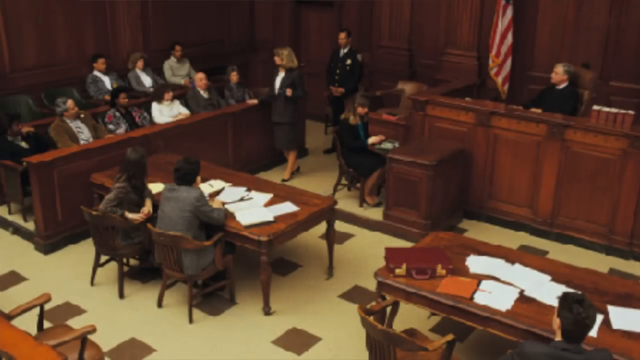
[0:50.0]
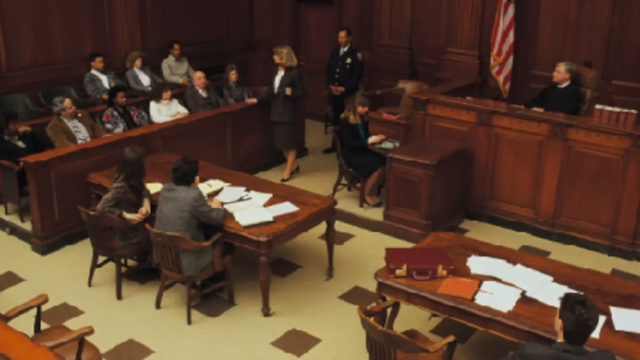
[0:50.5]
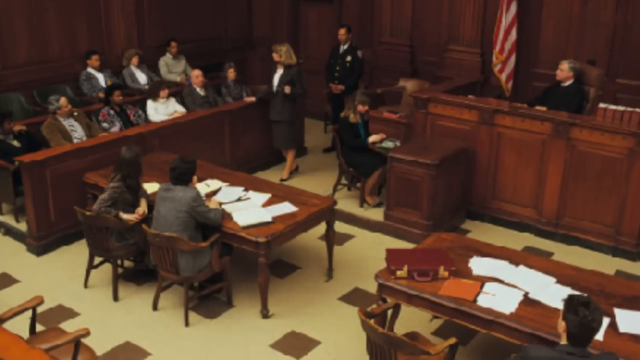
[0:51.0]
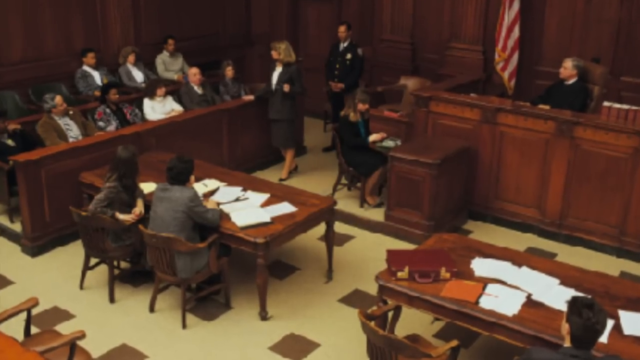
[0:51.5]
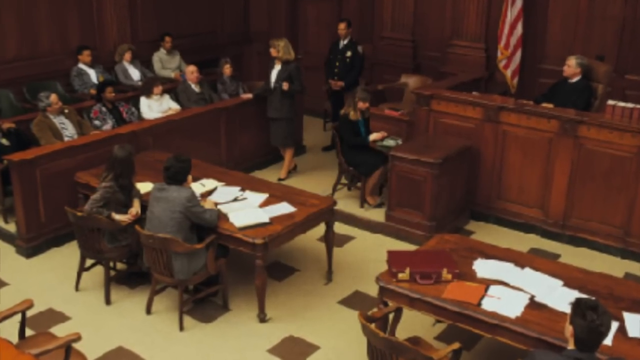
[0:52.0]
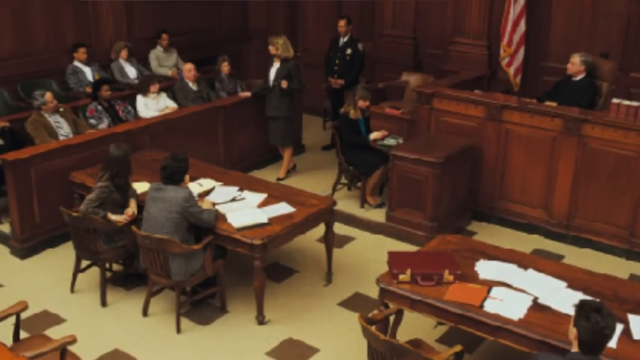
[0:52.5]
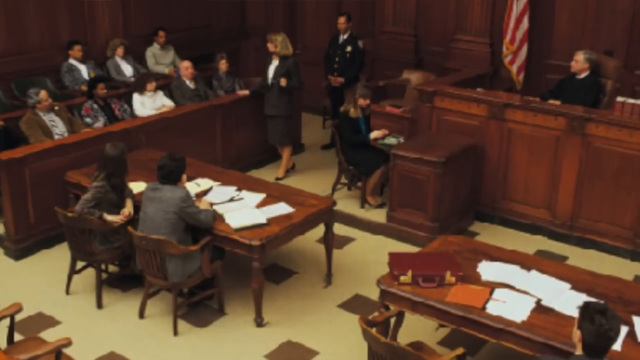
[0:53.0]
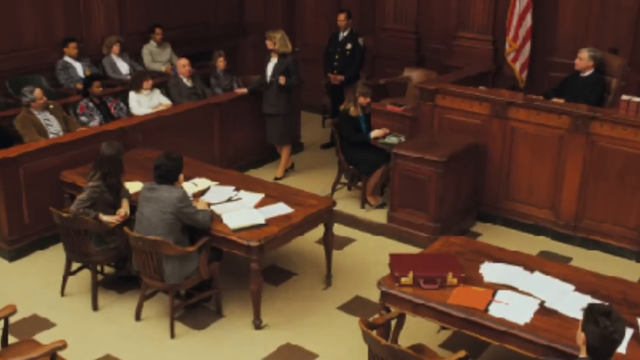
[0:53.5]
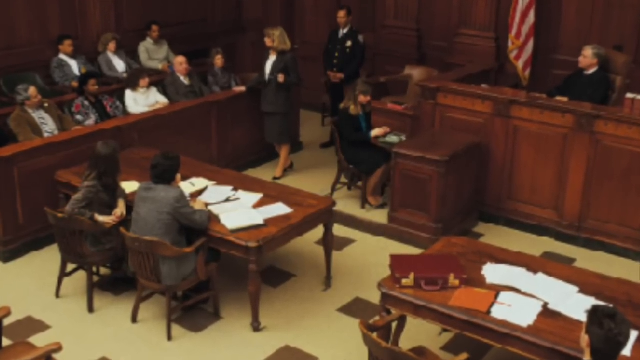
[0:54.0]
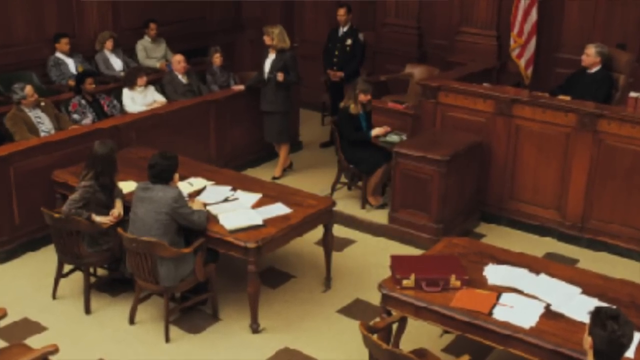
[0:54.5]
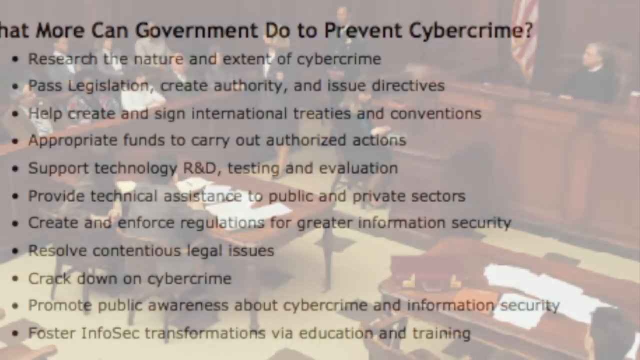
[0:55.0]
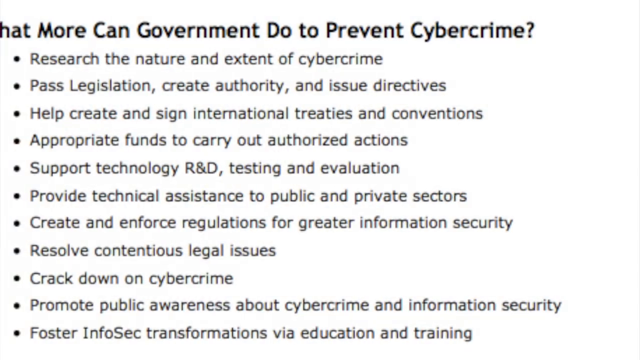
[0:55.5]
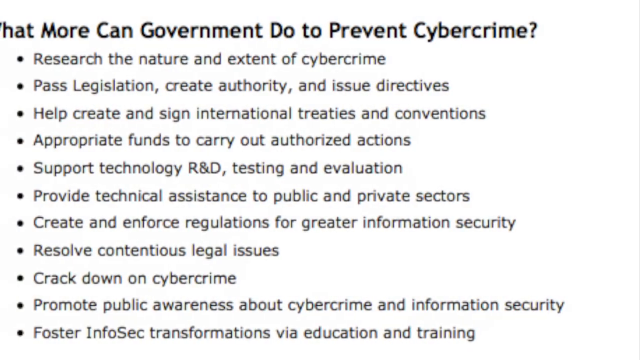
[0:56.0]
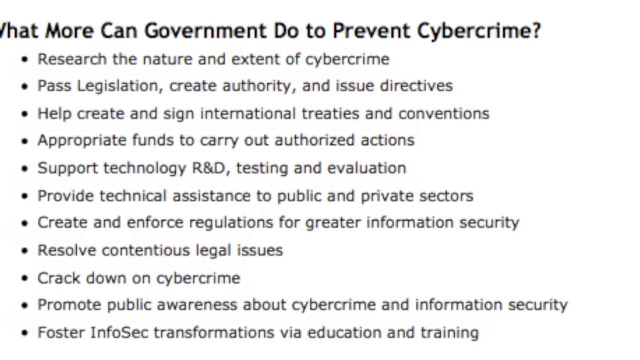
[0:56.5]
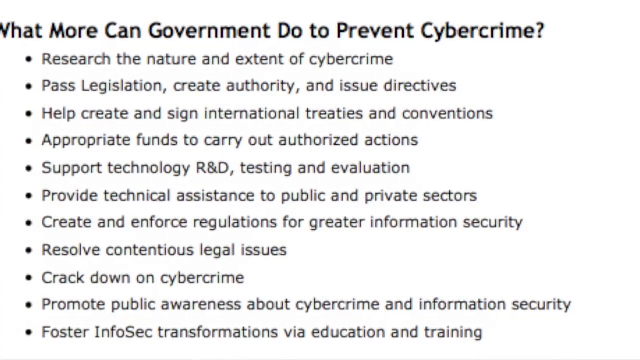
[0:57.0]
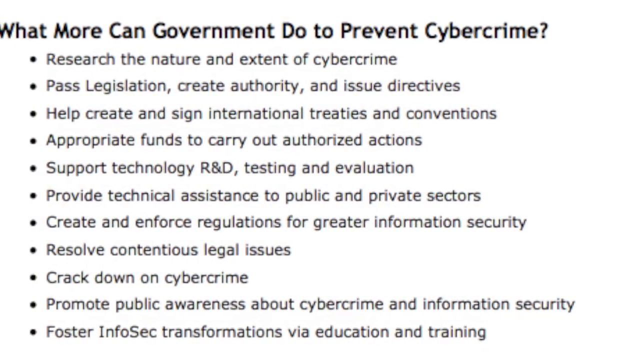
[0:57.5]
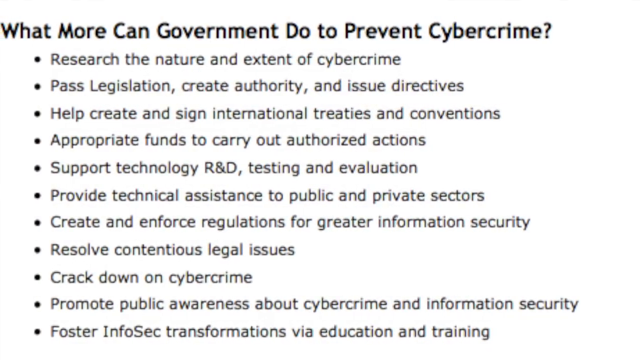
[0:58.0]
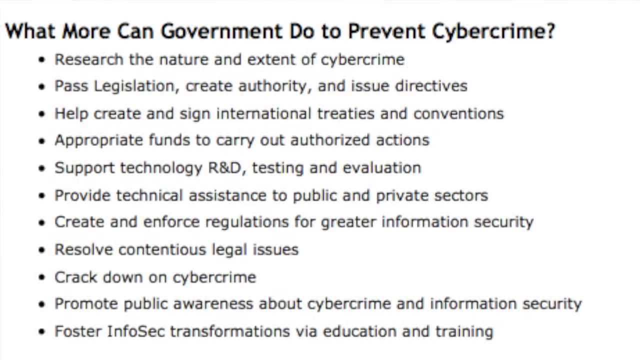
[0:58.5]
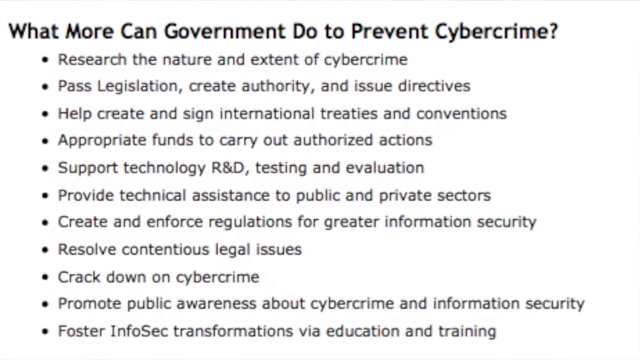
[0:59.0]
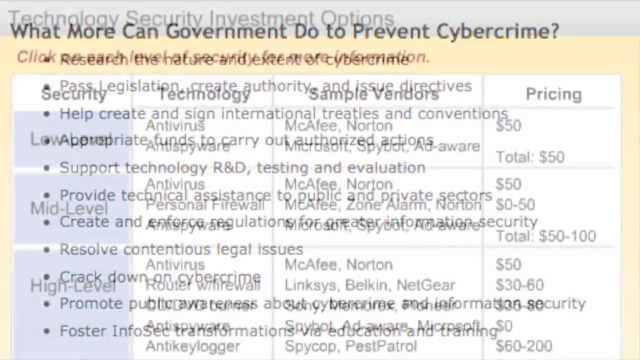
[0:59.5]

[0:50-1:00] A courtroom set up with wooden desks and chairs appears, with the judge seated. A woman has a desk facing the judge, and on the right side a police officer is standing. Men and women are sitting where the jury sits, and a woman in a black jacket and black skirt stands there talking to the jury. Opposite her is a desk with two people whose backs face the camera, and on a table to the right there are papers and a briefcase but no people. The visuals are obscured so that the faces of the people cannot be seen clearly.